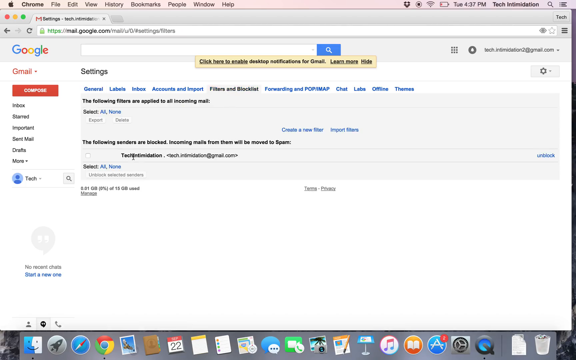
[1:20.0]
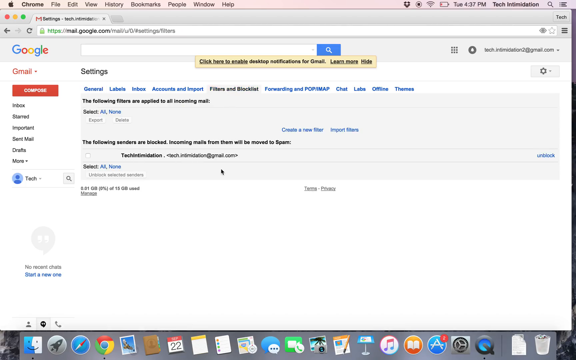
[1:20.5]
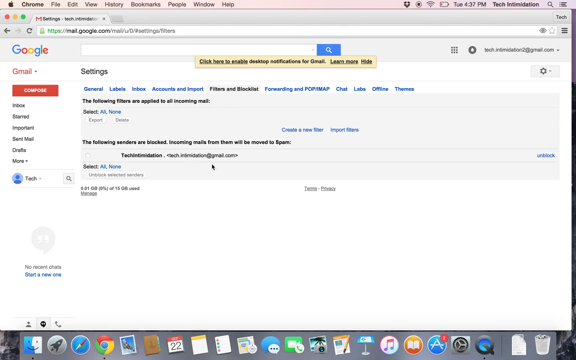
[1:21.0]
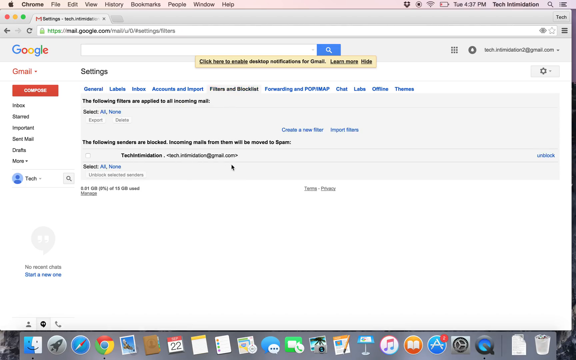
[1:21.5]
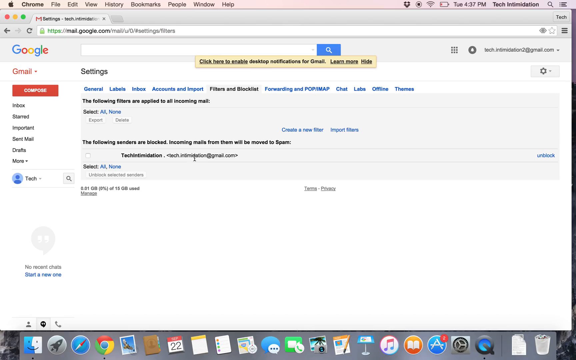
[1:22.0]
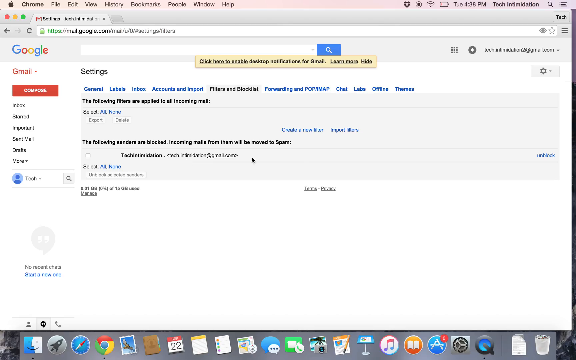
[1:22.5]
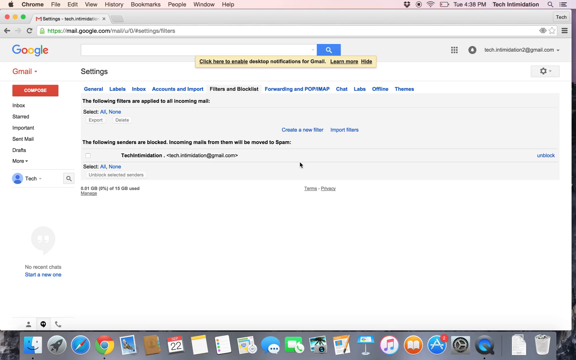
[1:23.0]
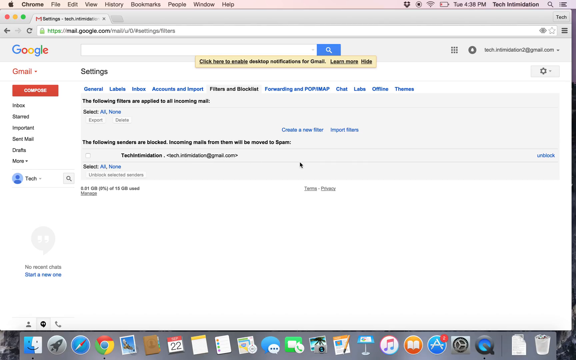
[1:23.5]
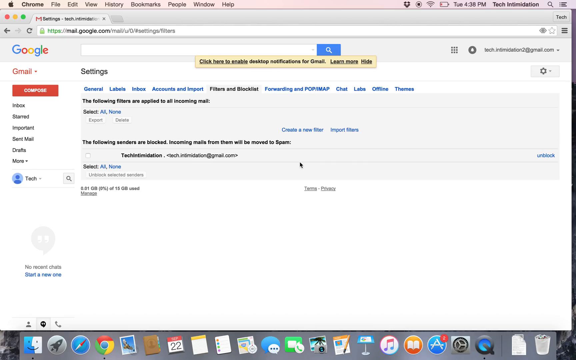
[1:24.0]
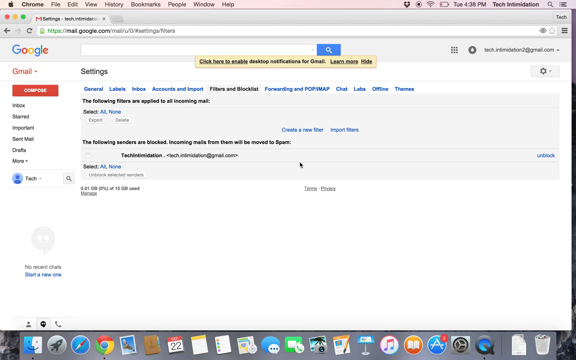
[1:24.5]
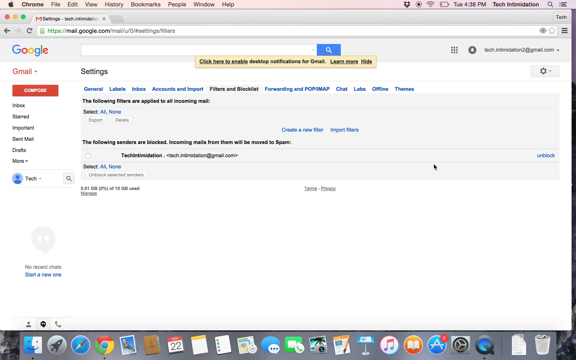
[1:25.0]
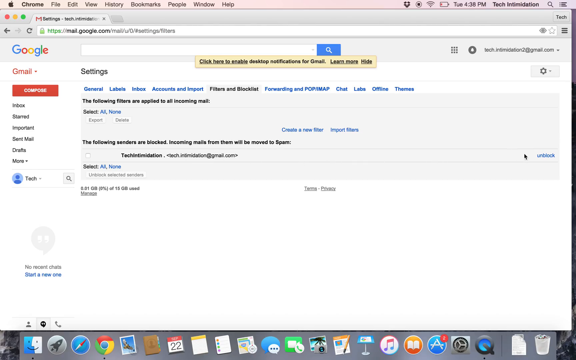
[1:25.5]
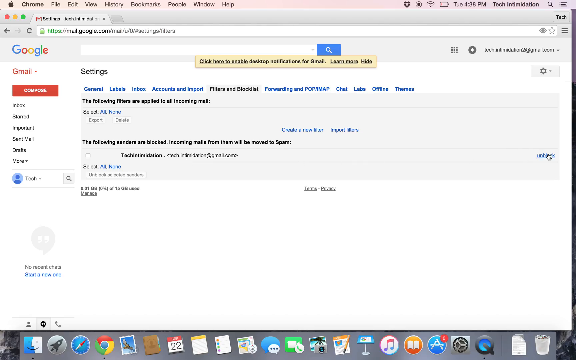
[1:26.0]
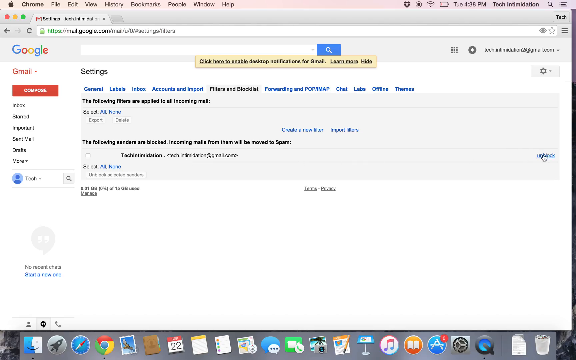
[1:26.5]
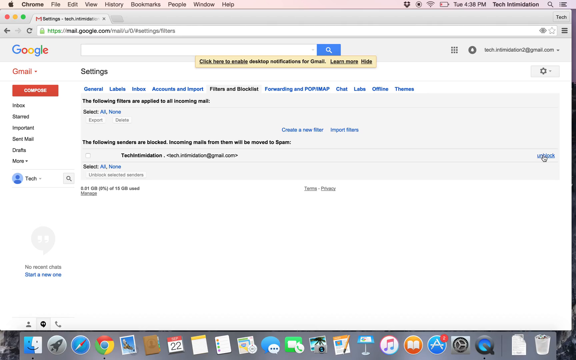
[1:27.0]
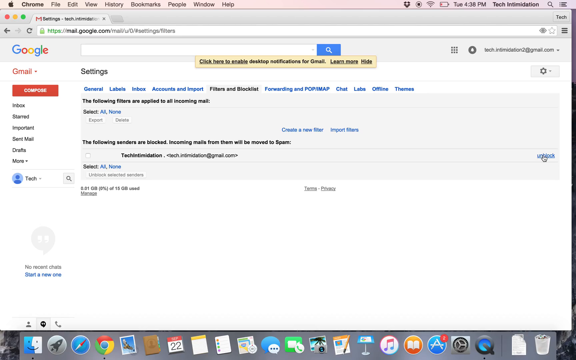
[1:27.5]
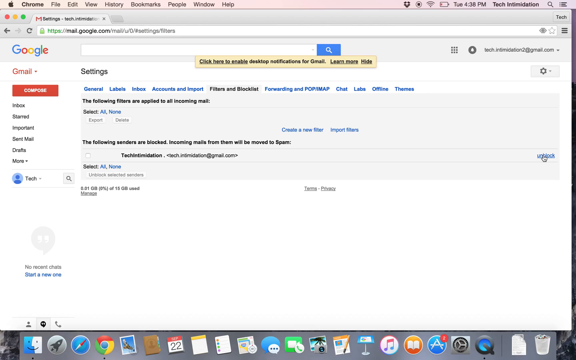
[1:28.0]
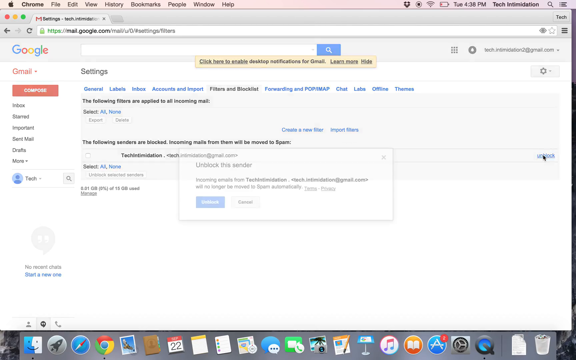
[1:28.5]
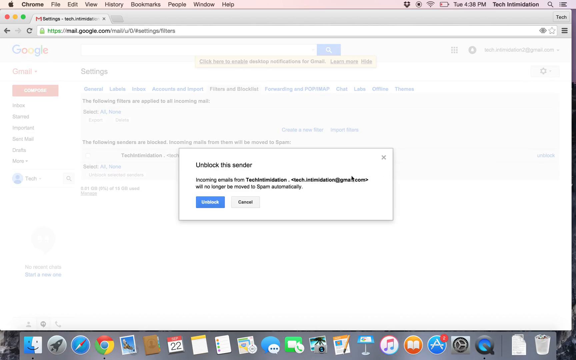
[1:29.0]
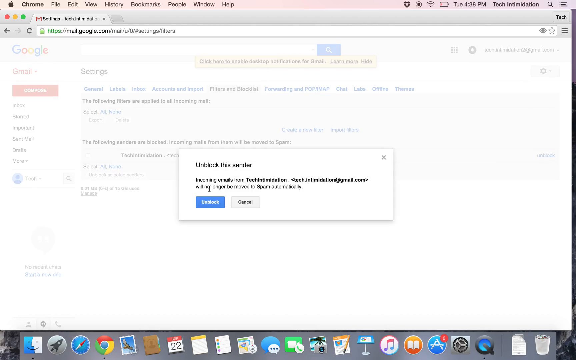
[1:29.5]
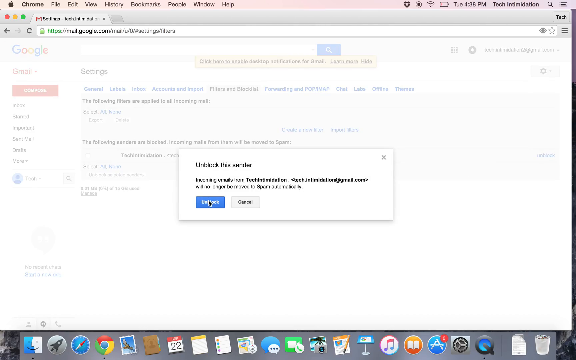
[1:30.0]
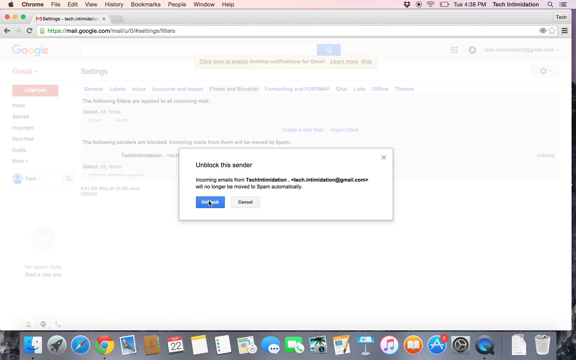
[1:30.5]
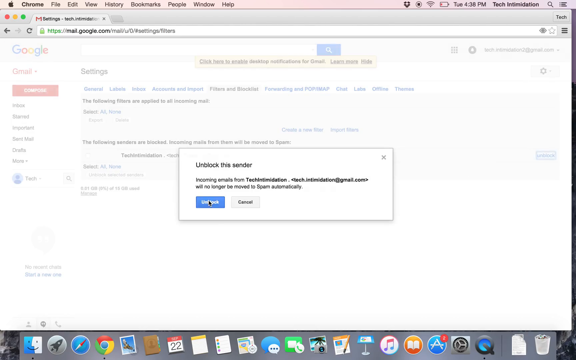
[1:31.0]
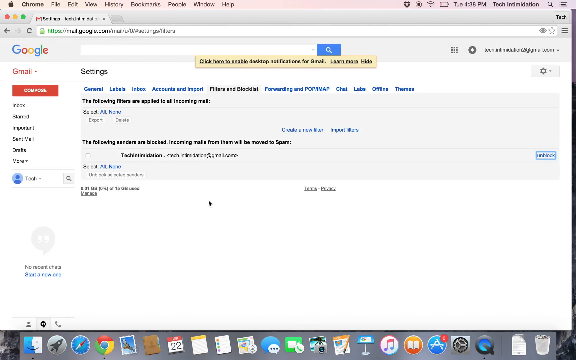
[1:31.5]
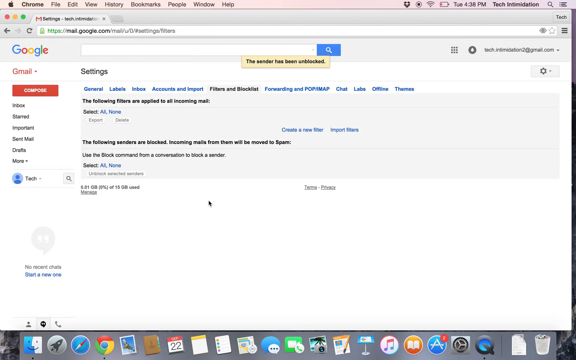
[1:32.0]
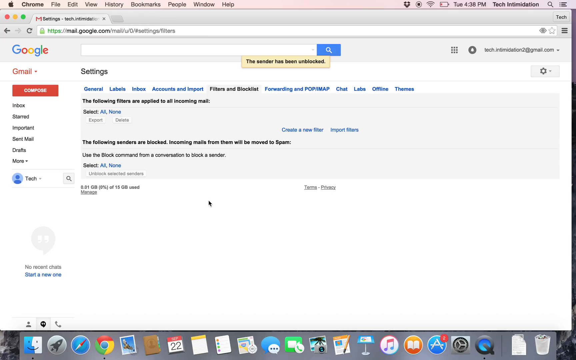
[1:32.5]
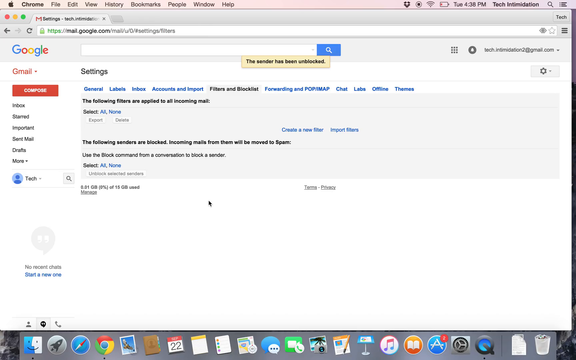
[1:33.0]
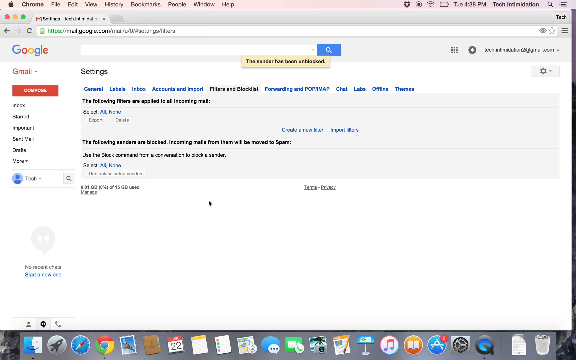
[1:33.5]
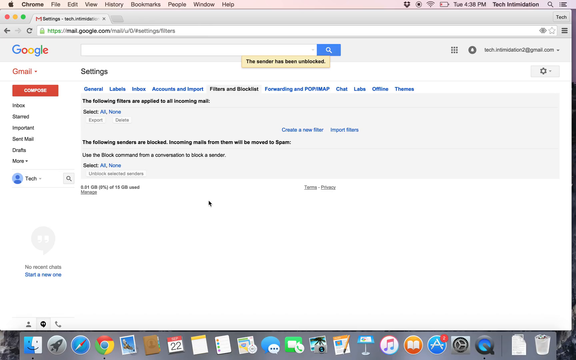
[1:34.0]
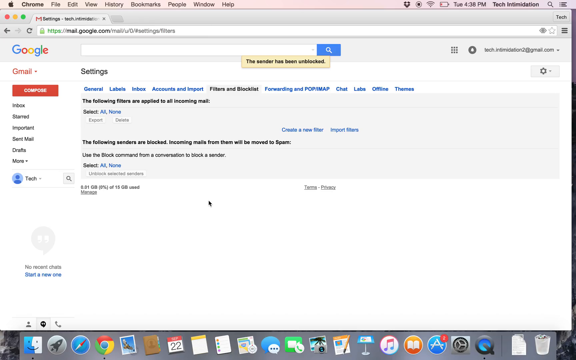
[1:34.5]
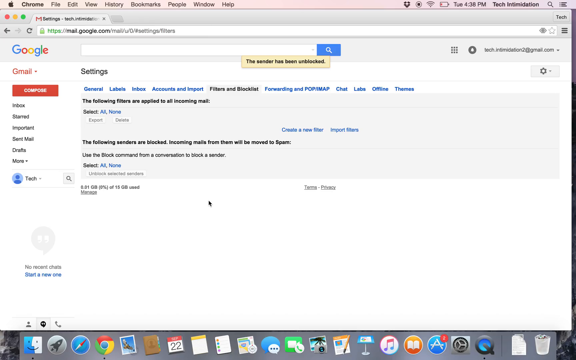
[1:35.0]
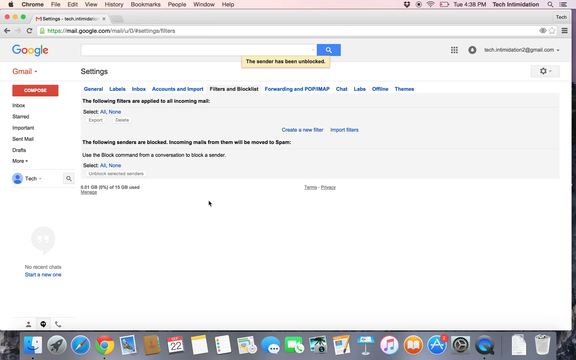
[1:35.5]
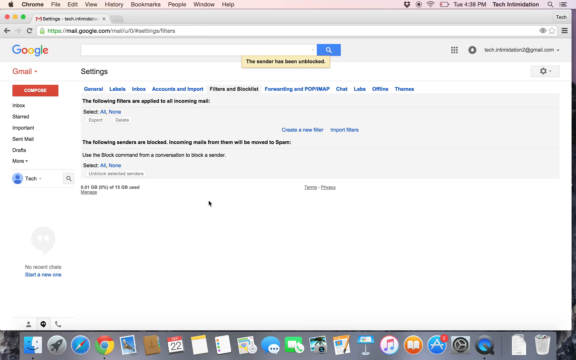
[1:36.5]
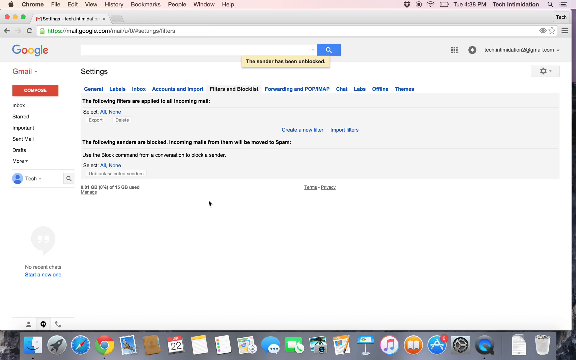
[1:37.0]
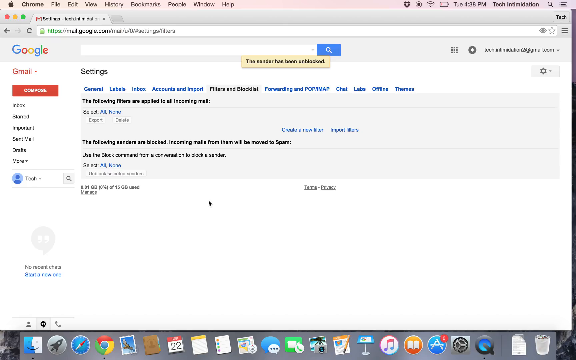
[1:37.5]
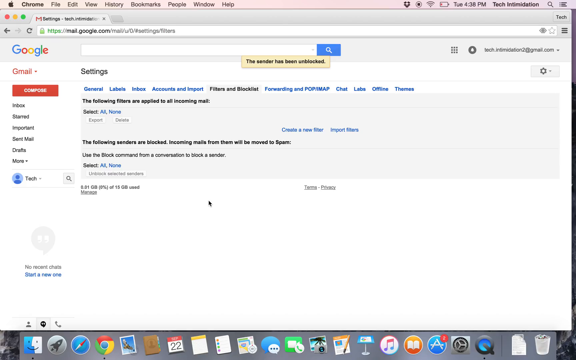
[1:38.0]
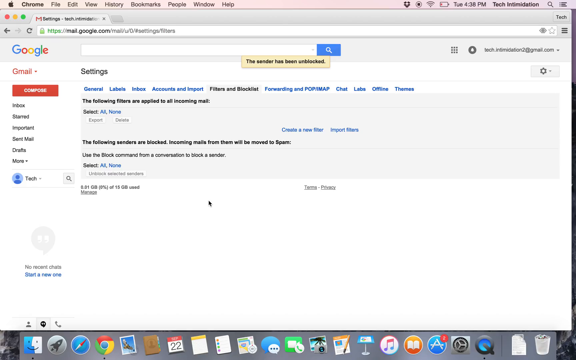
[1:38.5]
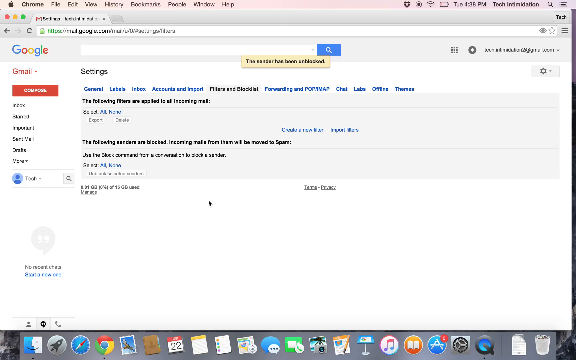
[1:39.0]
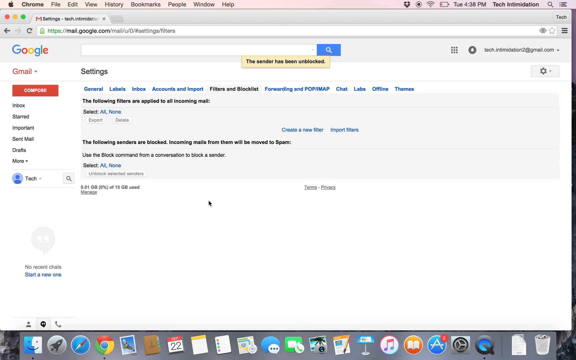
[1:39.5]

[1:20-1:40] A spam email is clicked on, and the spam image is displayed. More is clicked, then the option to block tech notification, for a tech notification gmail.com sender. After Block is clicked, a message shows that incoming messages from this sender have been blocked. Inbox is then clicked, then tech notification, and the primary tab is shown to be empty. Next, Go to Settings is clicked, the settings load, and filters and blocked addresses are opened. The blocked tech notification sender is selected and unblocked.